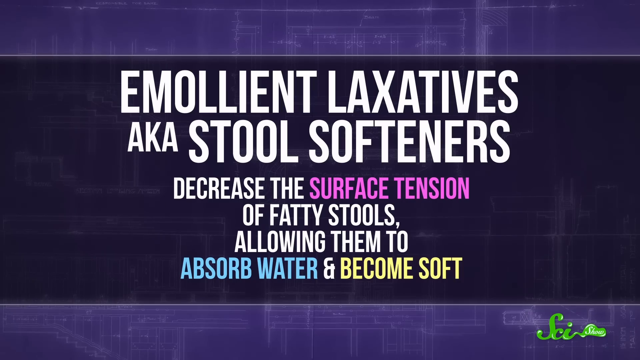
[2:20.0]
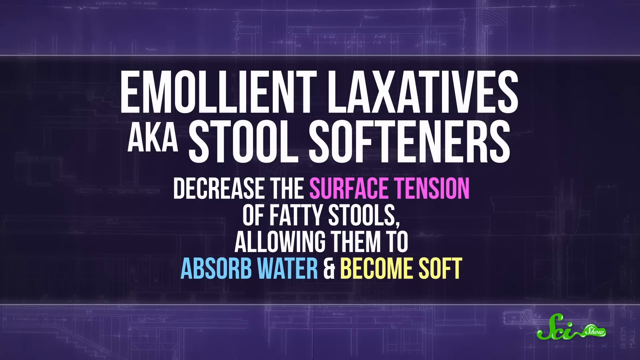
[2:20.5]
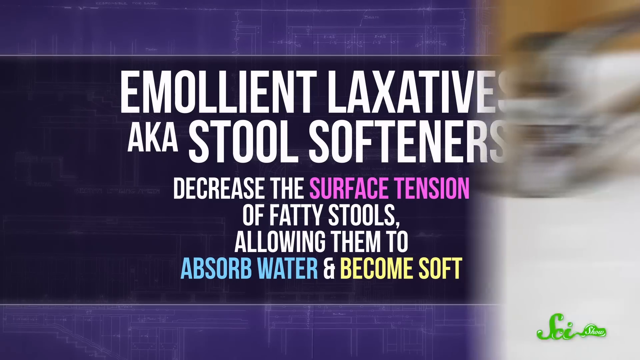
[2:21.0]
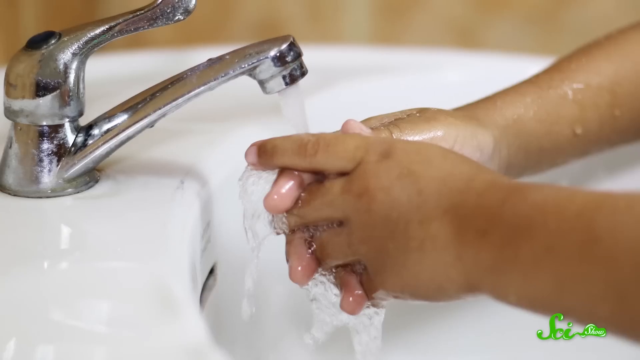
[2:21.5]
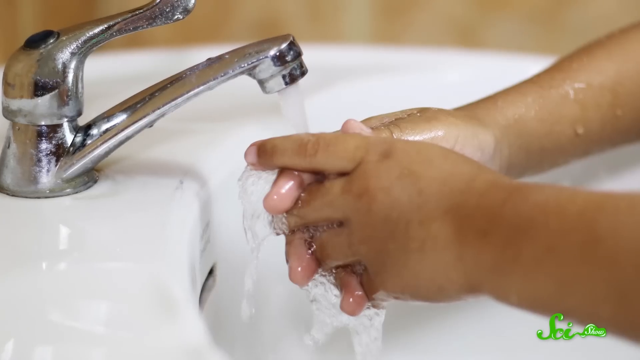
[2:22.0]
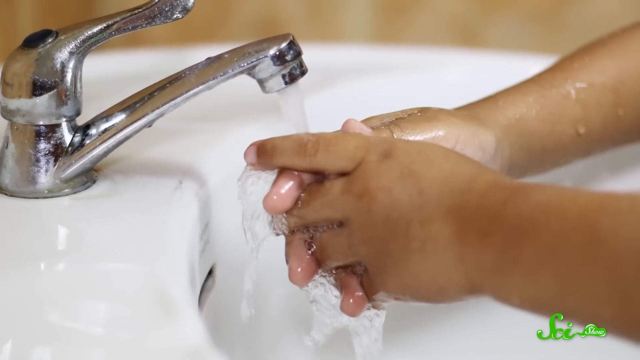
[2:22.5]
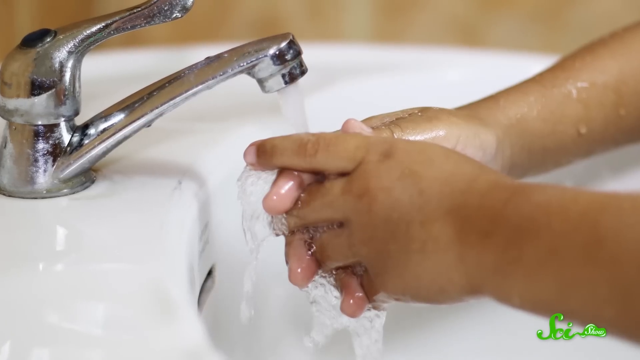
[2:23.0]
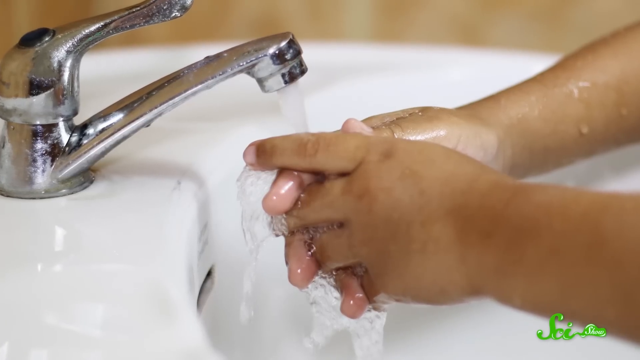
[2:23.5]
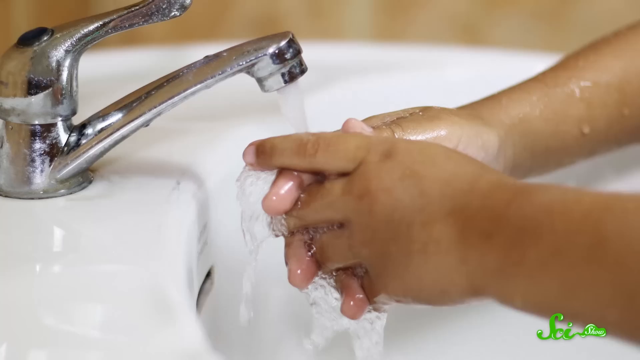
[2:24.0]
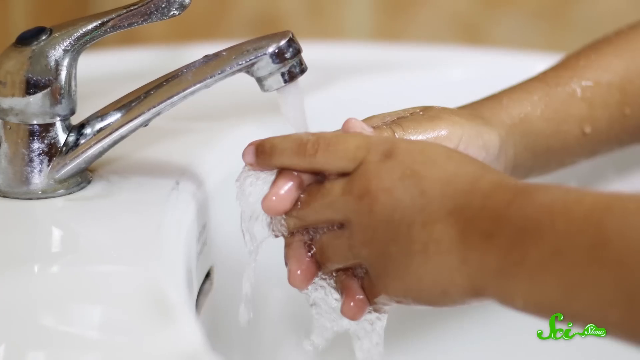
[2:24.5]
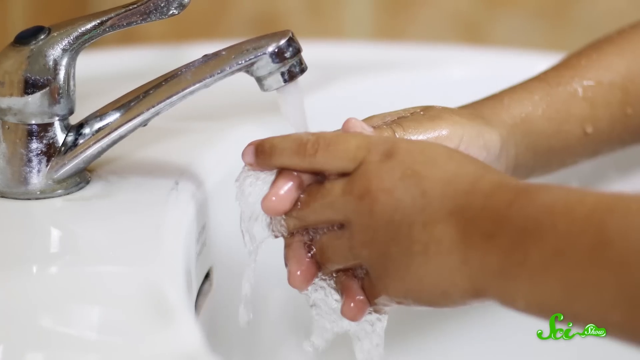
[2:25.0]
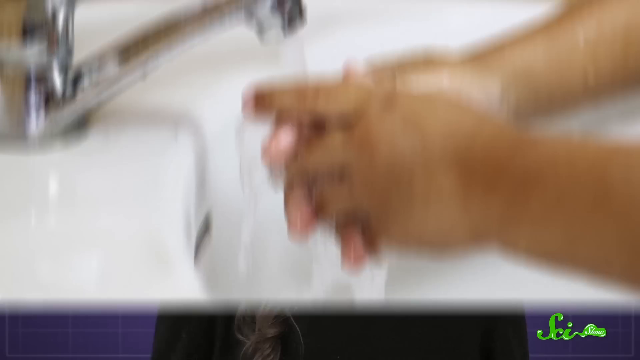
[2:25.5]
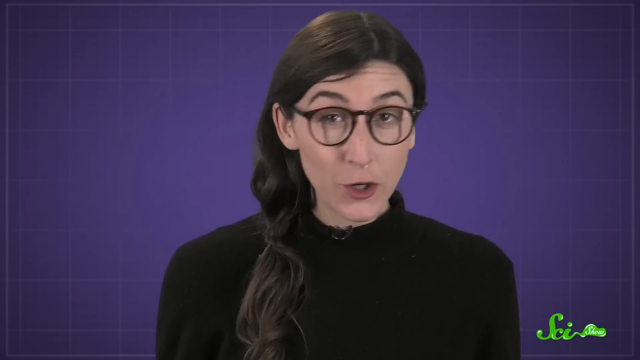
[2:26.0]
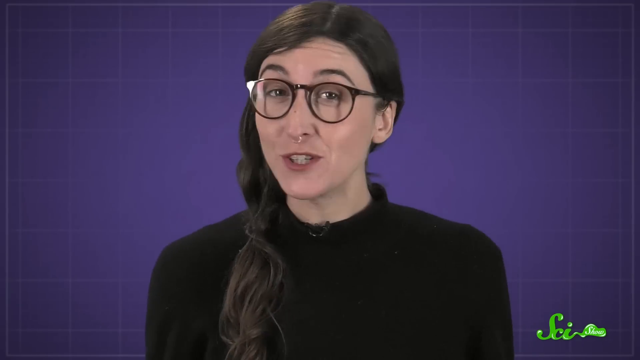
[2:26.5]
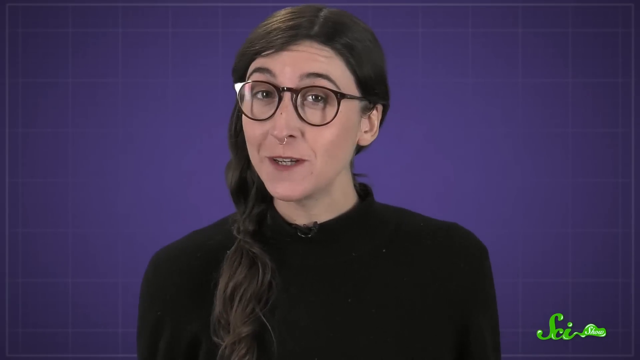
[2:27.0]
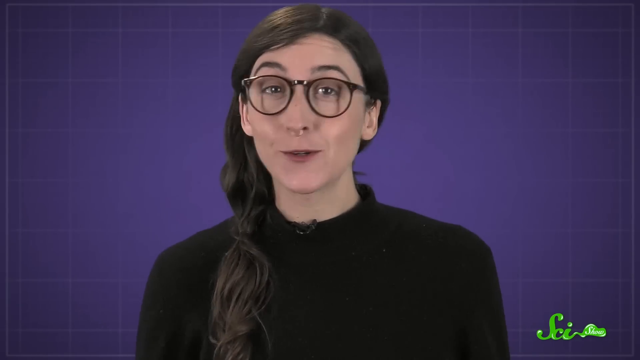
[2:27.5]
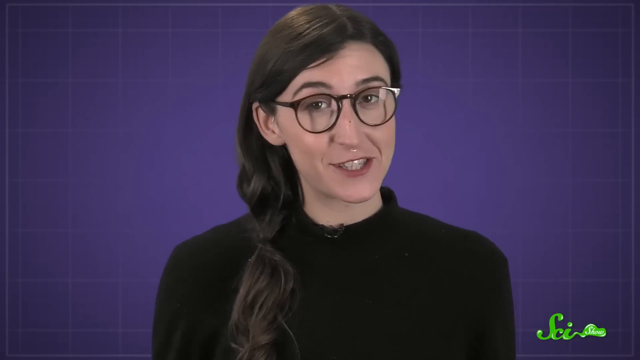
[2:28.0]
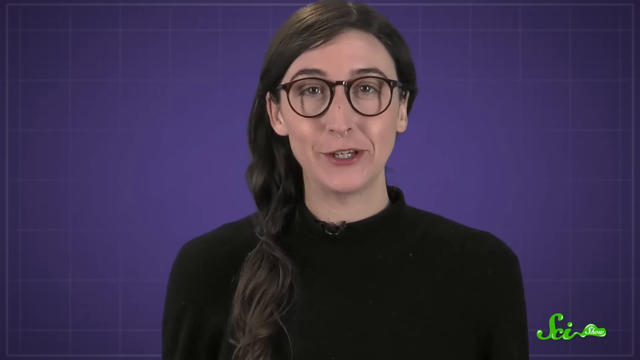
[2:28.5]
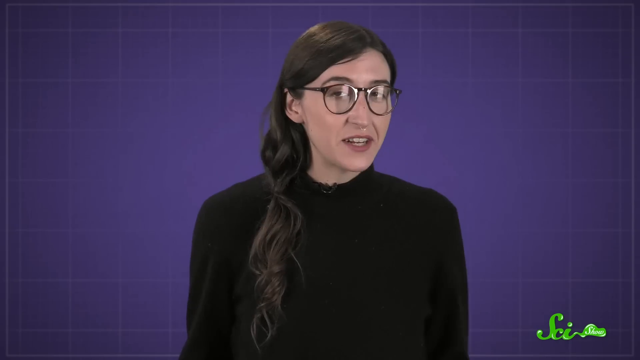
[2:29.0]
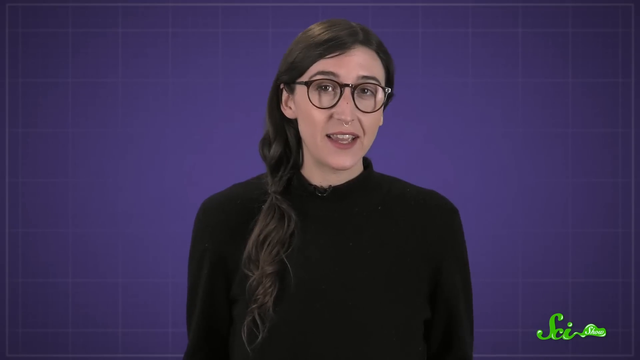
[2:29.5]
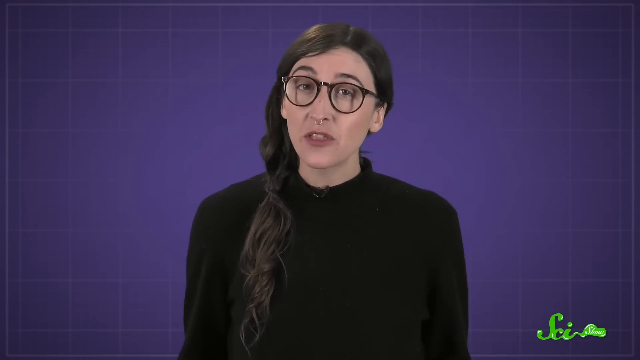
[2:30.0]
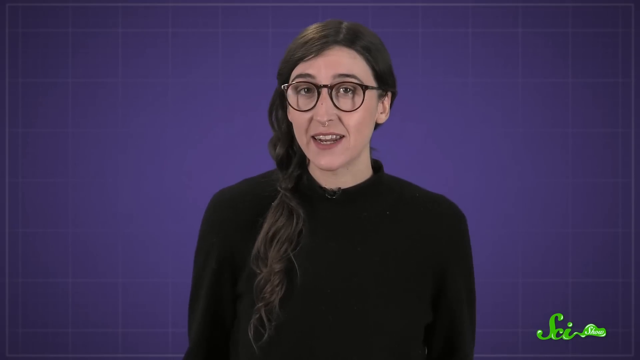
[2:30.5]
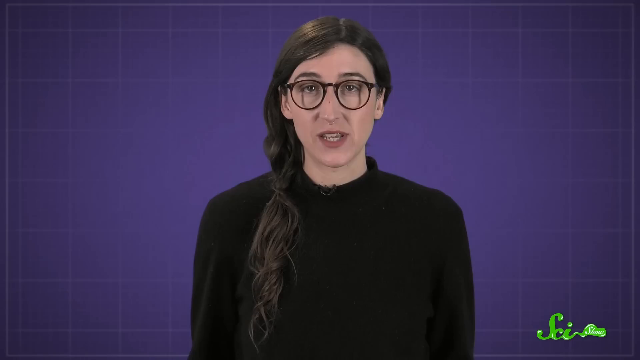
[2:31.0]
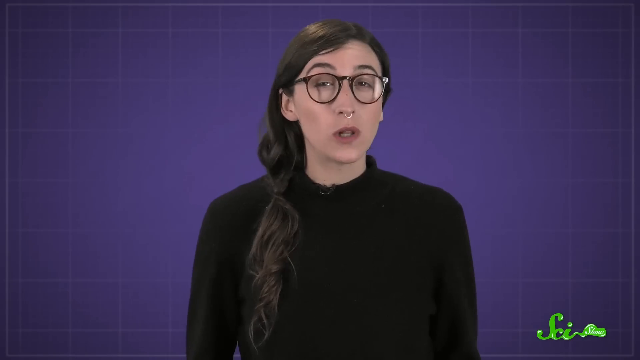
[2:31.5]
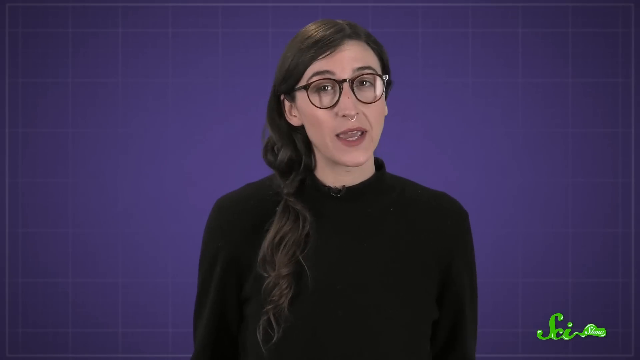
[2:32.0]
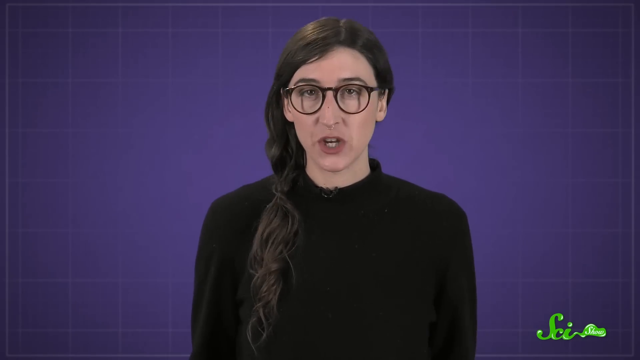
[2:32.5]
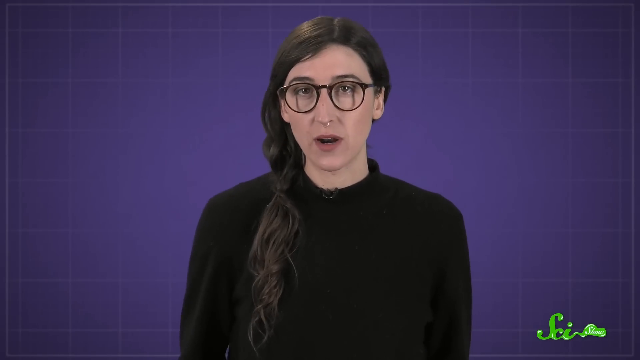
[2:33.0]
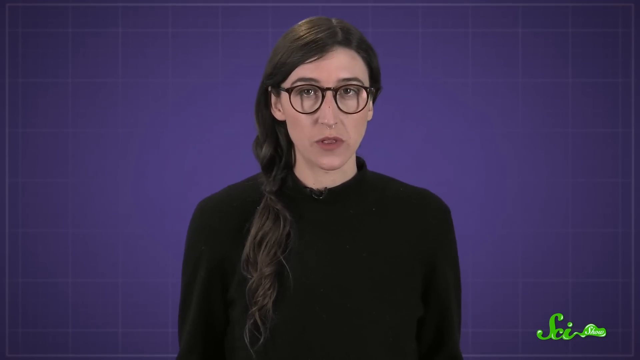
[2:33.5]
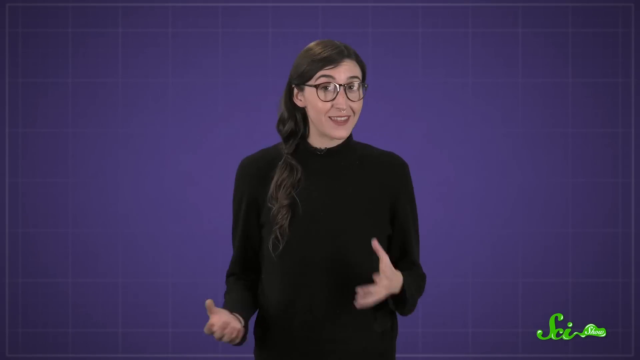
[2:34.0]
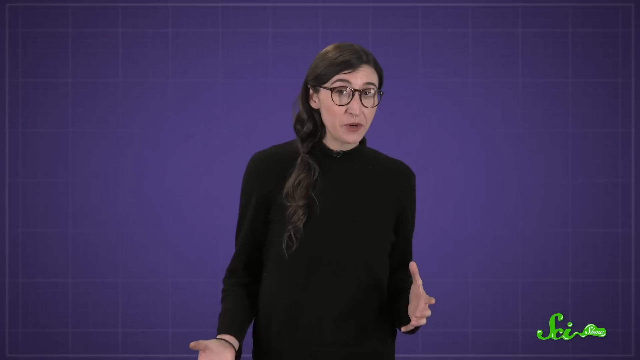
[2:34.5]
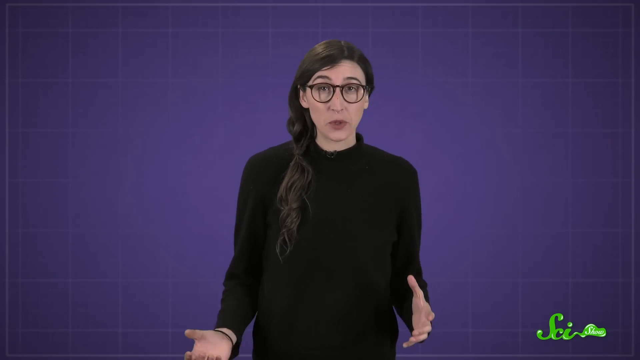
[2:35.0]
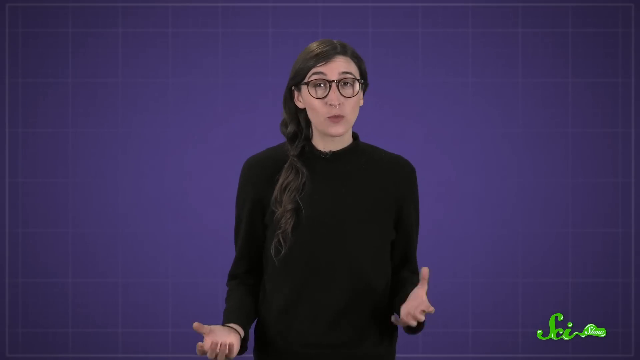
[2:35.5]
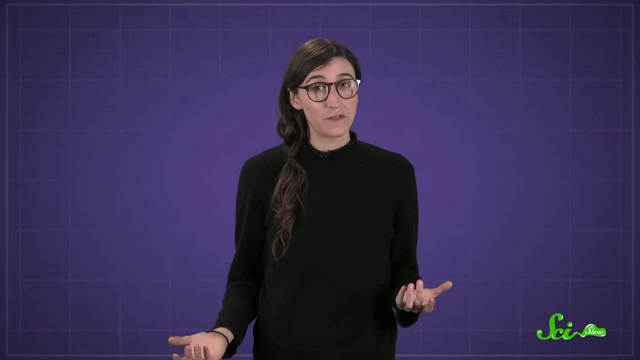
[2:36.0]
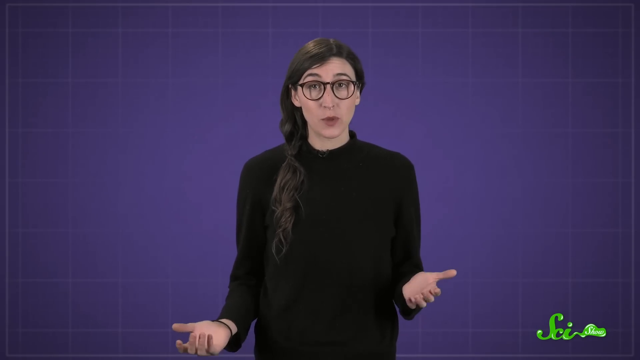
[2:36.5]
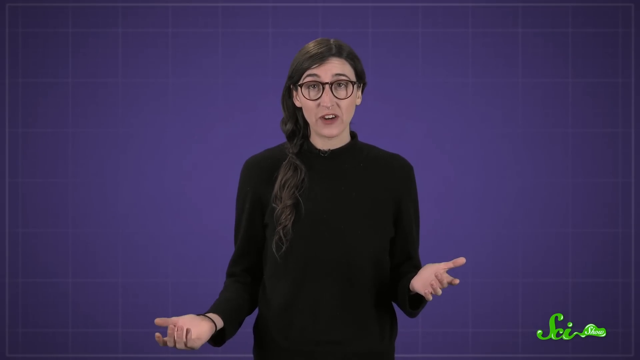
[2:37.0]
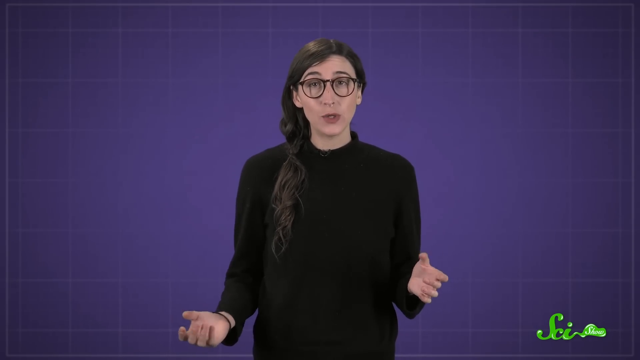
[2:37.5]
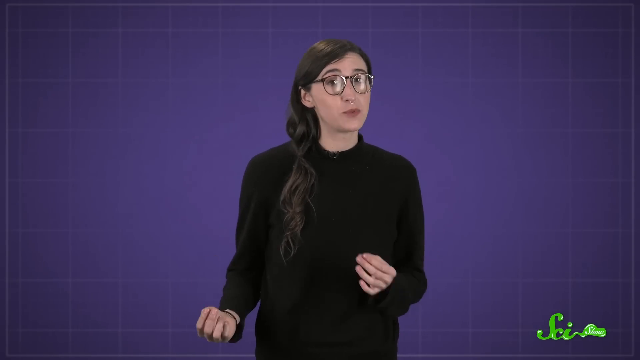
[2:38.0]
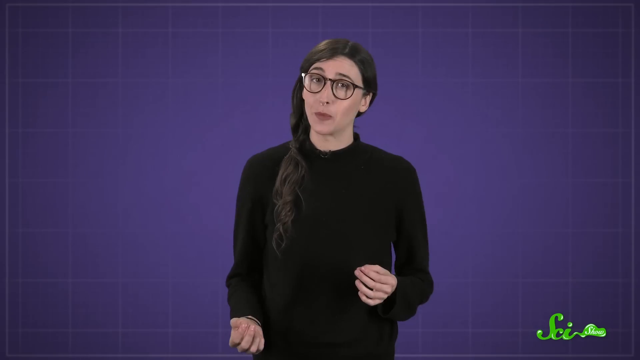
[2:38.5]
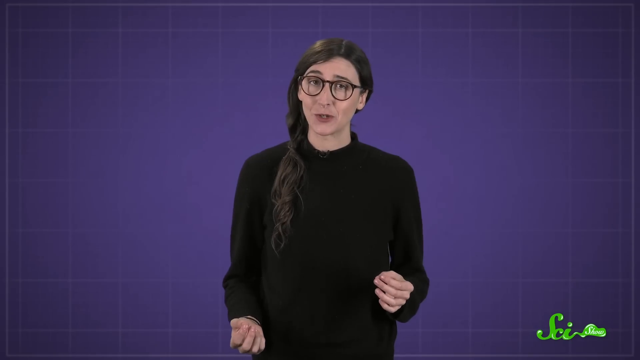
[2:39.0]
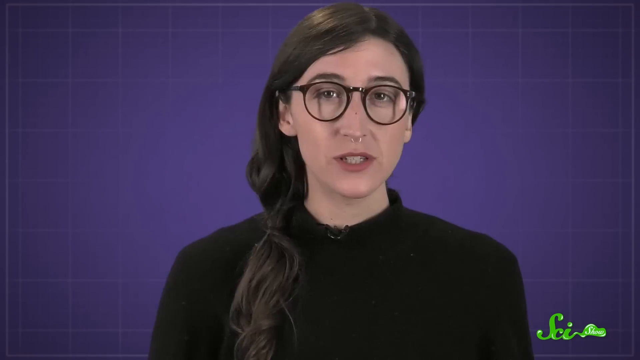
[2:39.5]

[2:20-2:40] Text reads "Emollient laxatives, a.k.a. stool softeners, decrease the surface tension of fatty stools, allowing them to absorb water and become soft." A person is shown washing their hands. The woman then speaks again; she wears a dark sweater and glasses and has dark hair and dark eyes.